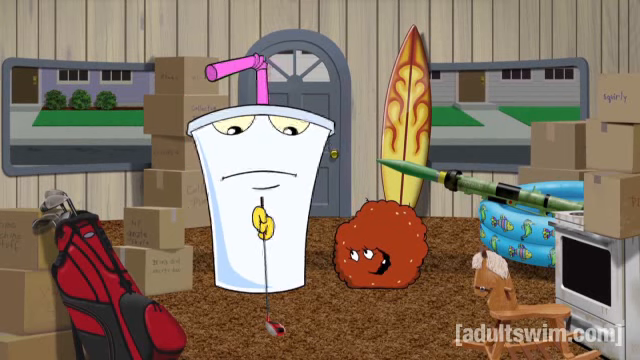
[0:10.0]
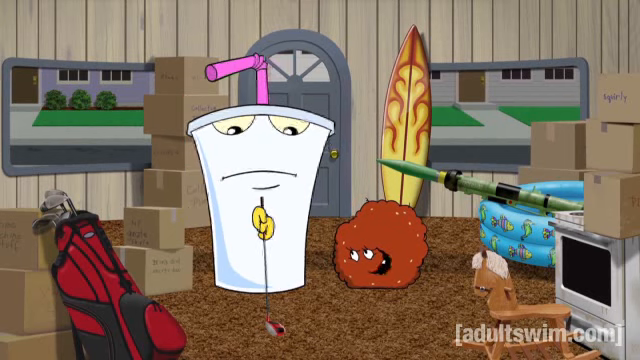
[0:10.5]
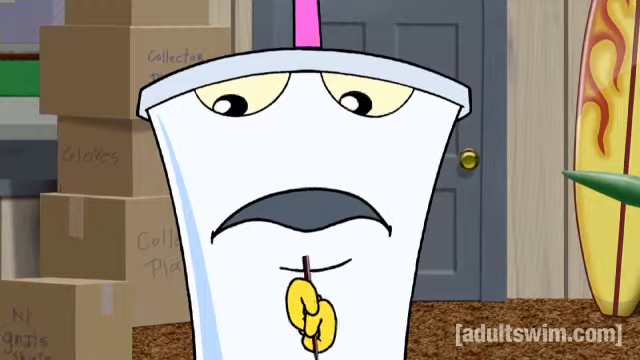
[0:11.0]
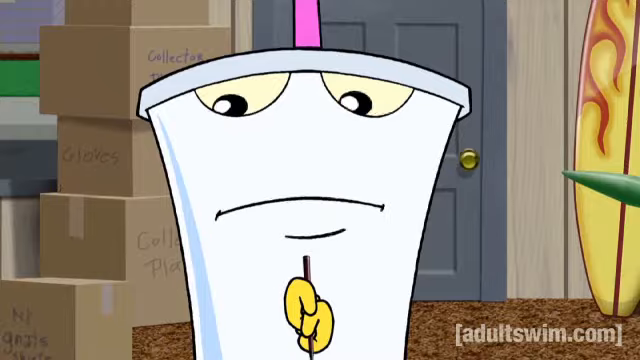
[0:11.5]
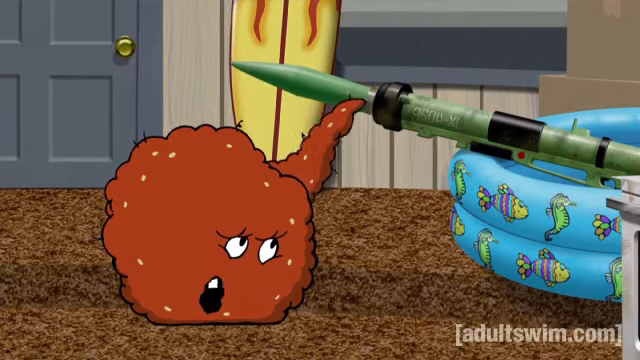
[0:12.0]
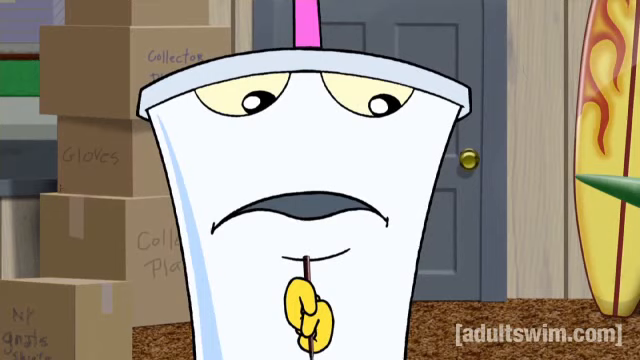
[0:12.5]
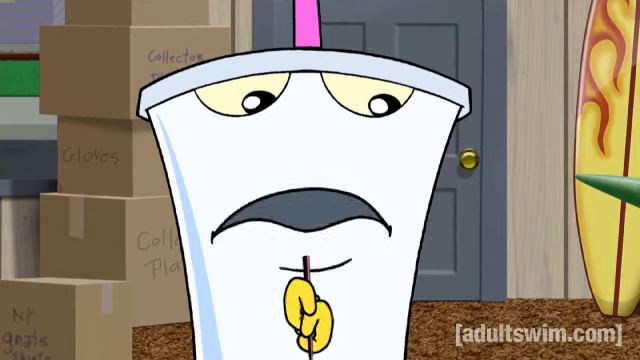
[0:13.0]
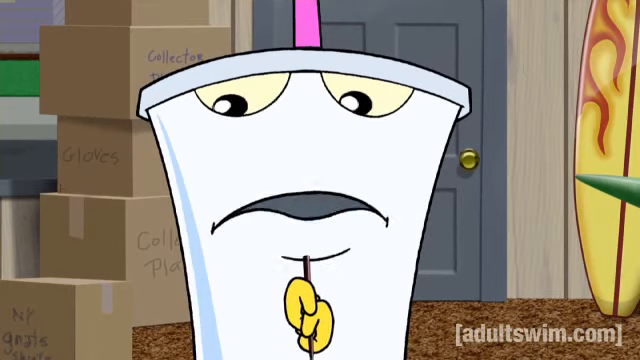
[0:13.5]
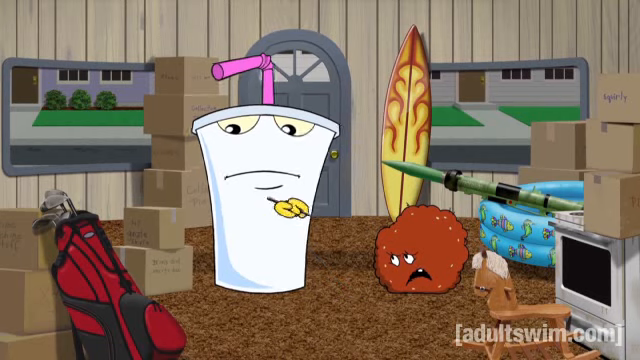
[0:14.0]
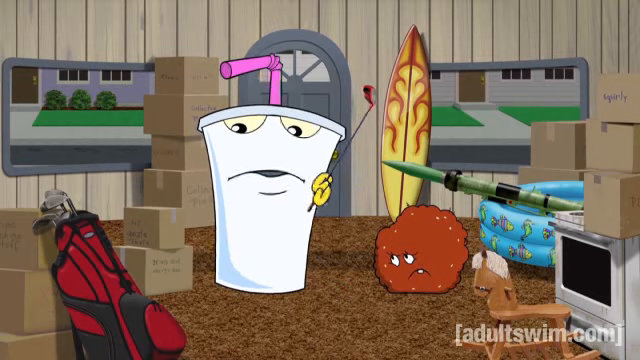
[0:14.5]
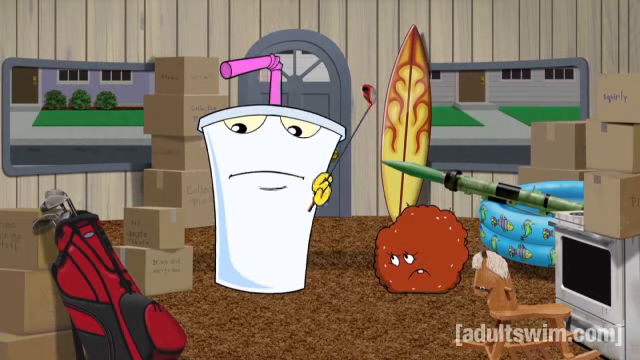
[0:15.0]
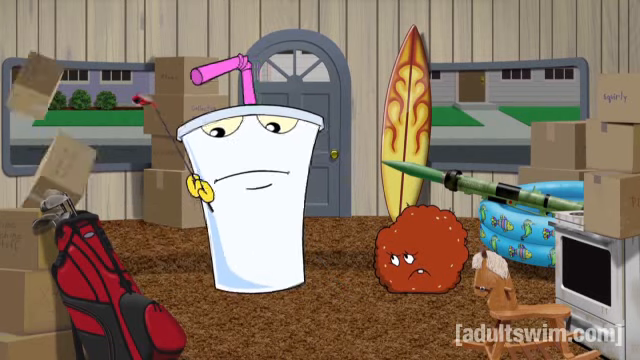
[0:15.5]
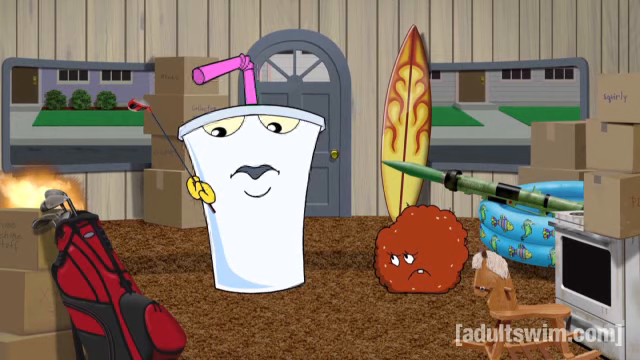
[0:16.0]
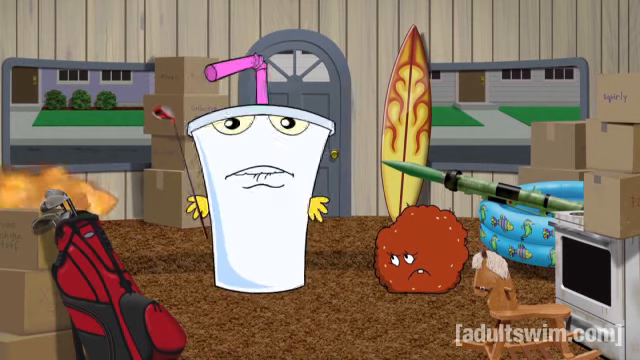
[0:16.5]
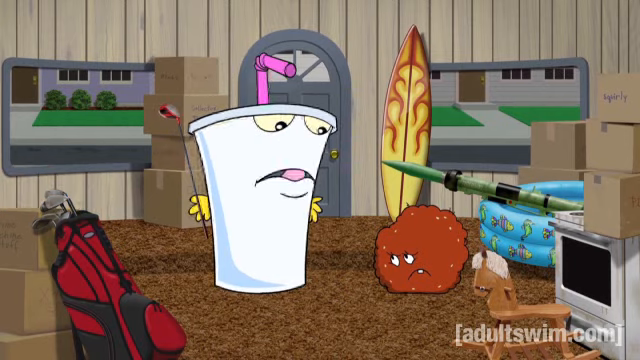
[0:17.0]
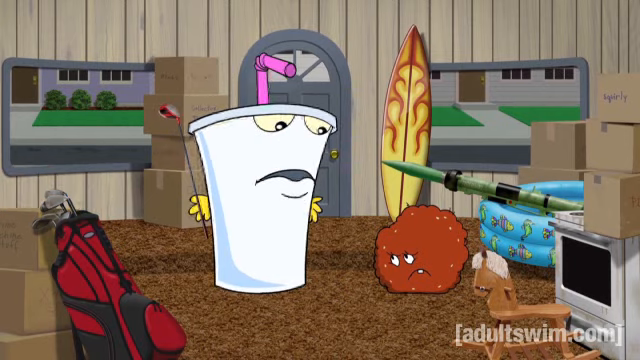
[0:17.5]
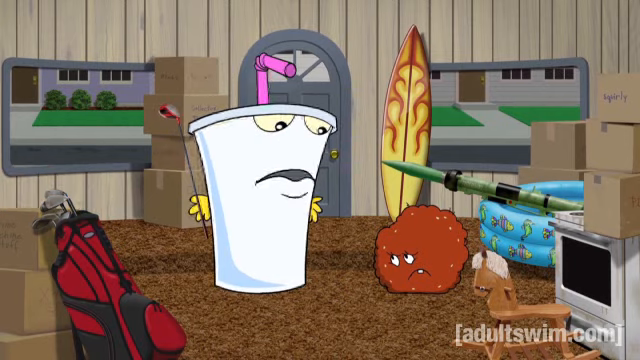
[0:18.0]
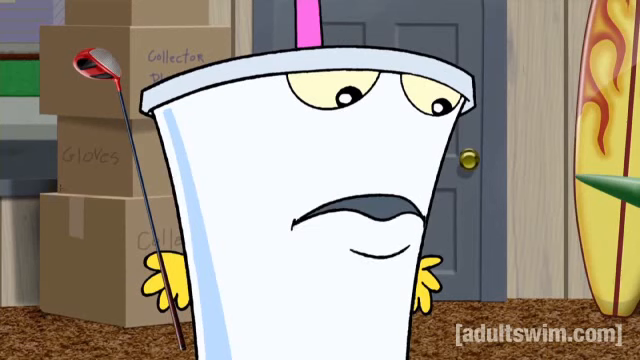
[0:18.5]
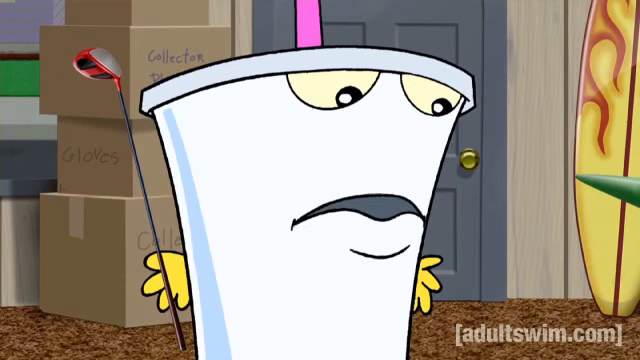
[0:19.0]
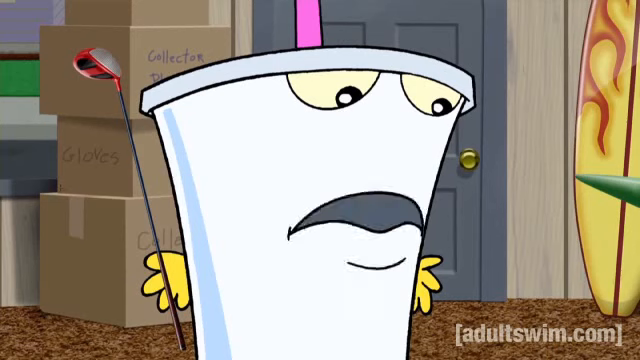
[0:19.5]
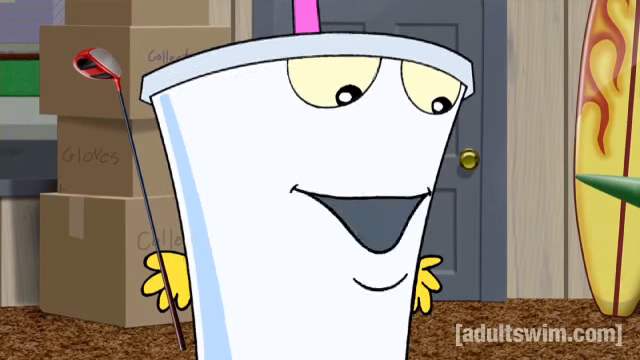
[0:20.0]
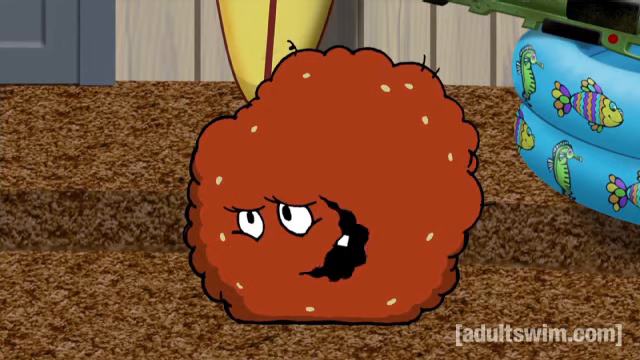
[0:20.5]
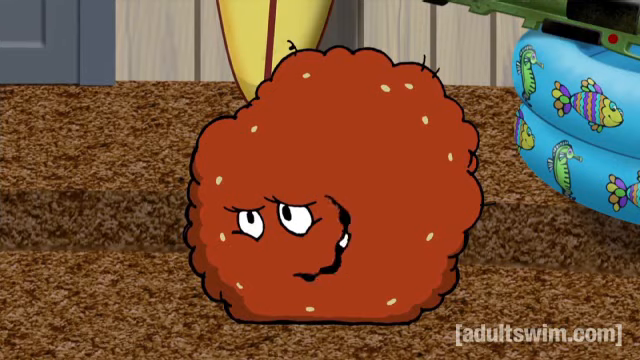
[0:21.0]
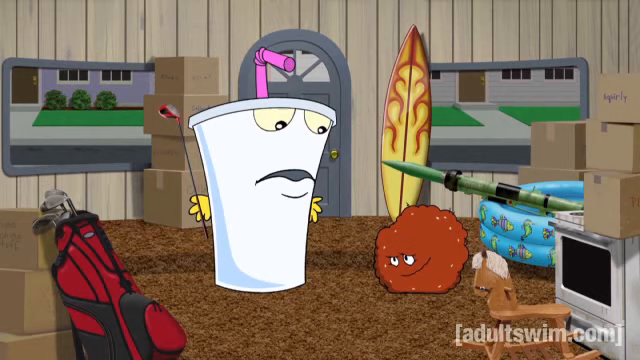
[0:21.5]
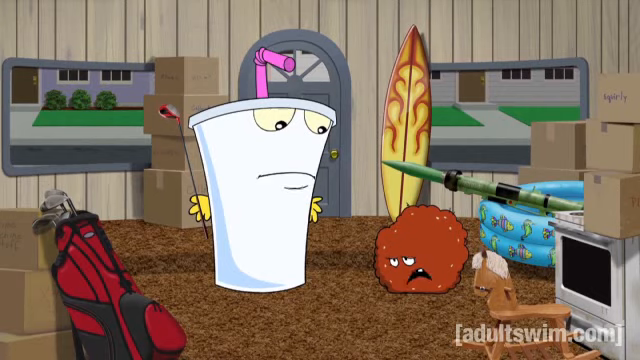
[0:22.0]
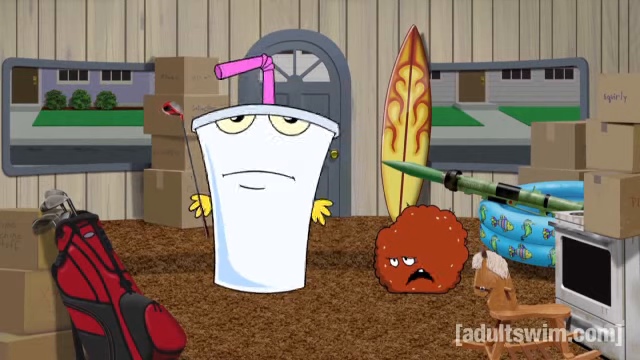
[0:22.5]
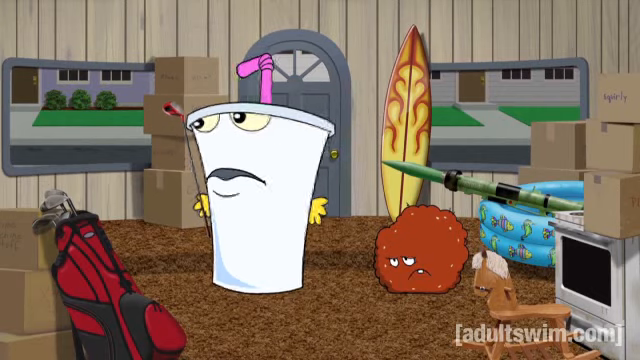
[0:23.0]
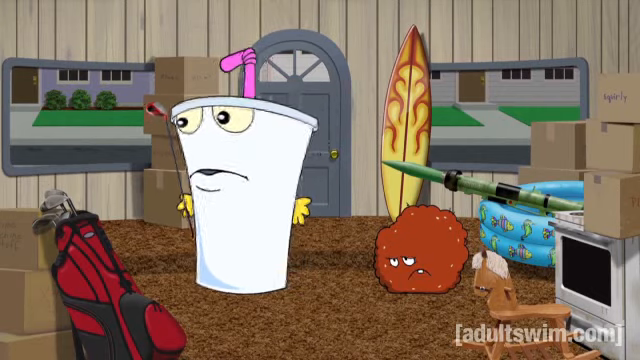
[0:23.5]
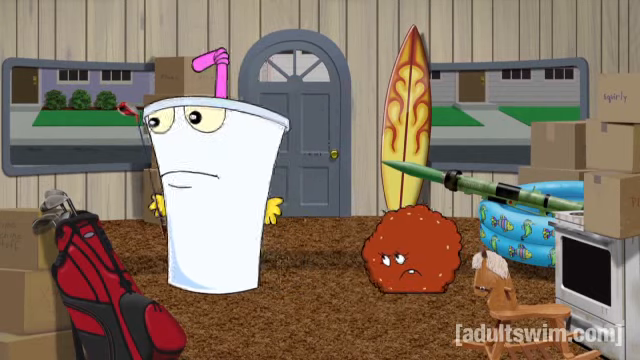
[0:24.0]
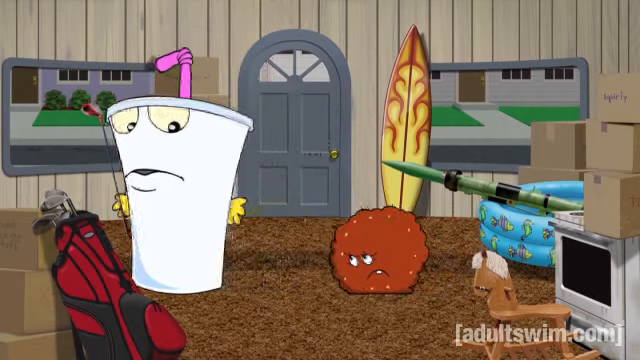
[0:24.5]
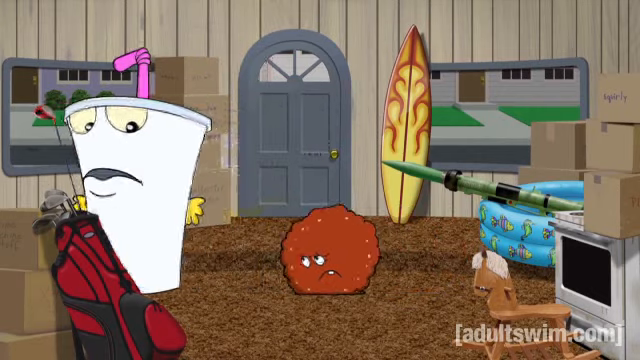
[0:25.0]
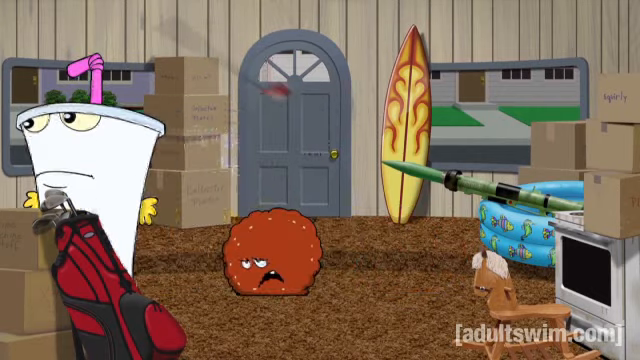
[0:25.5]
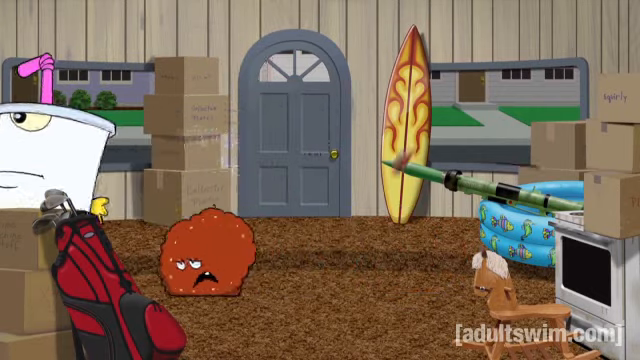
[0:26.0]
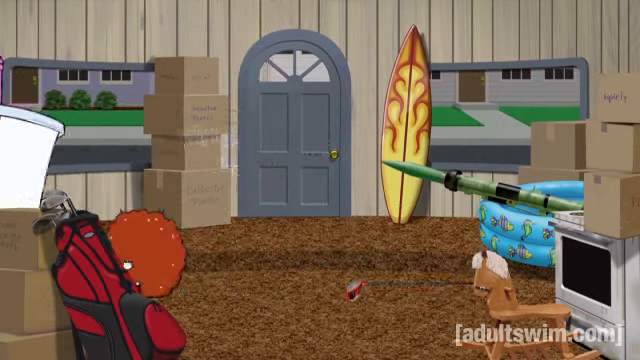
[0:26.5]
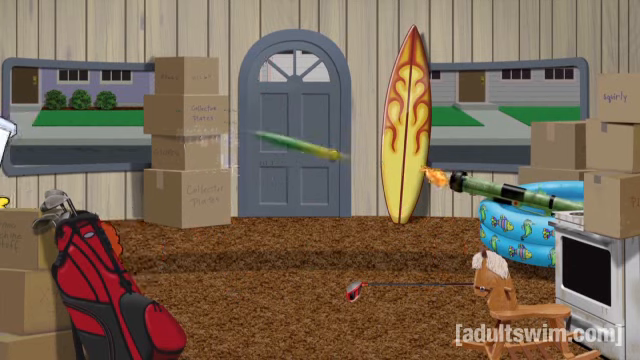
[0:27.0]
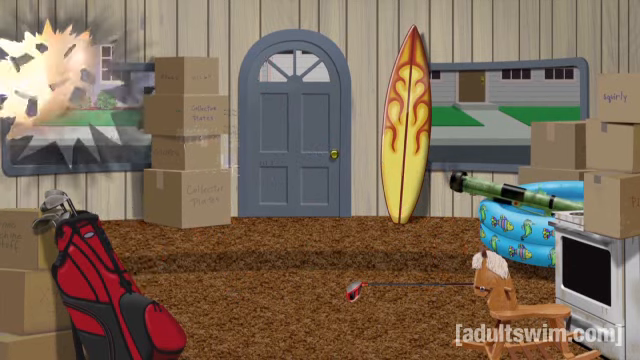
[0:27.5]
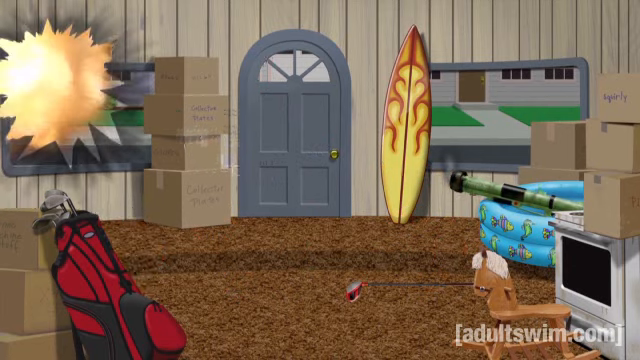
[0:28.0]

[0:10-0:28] Master Shake has the driver club from the set of clubs in front of him and lines up on the ground. It looks like he is going to hit the carpet, but he ends up hitting some of the moving boxes to his right. When he hits them, an explosion happens, and he continues talking to Meatwad. He then moves around the room, and as he goes off to the side, he throws the golf club into the pool, hitting the grenade launcher and launching a grenade through the window of the house, leaving a large hole. There also seems to be a wooden horse and a stove in the room, along with a box that says "supplies" on it. They walk off frame.